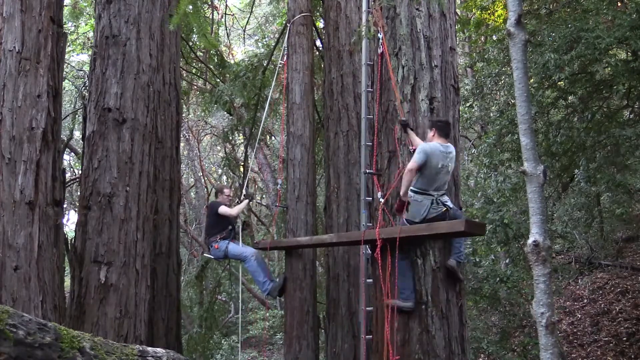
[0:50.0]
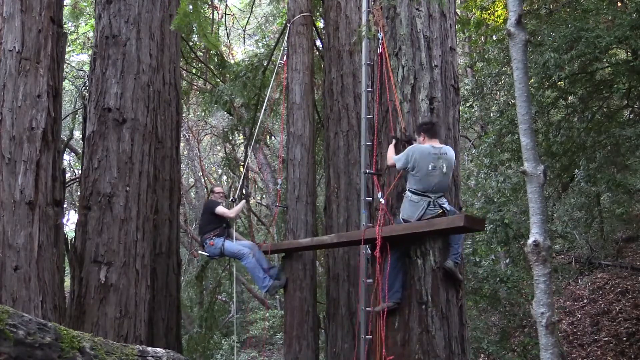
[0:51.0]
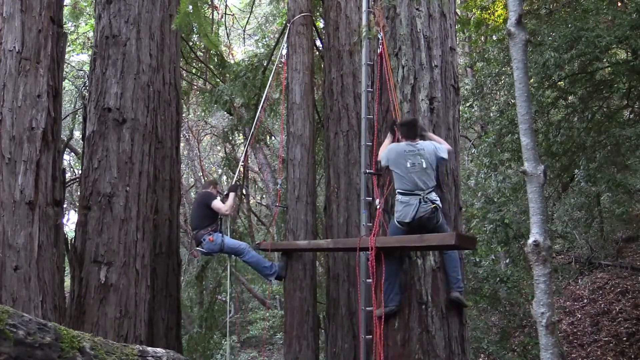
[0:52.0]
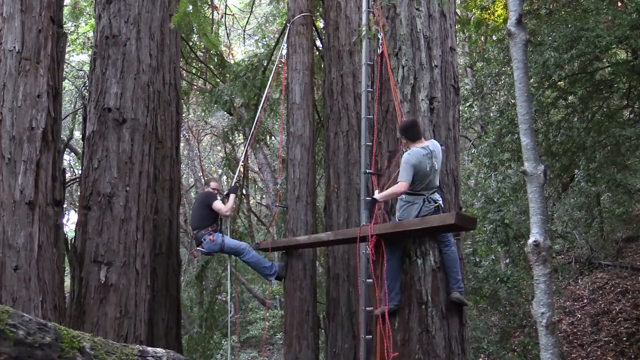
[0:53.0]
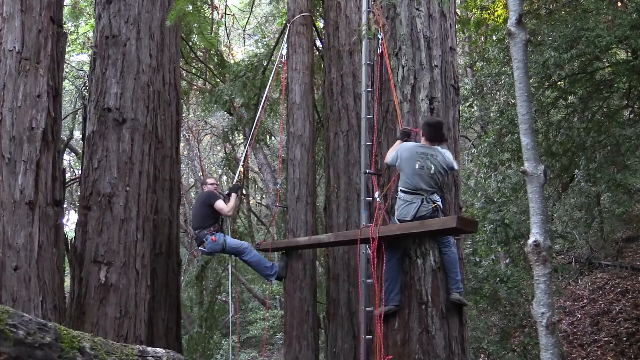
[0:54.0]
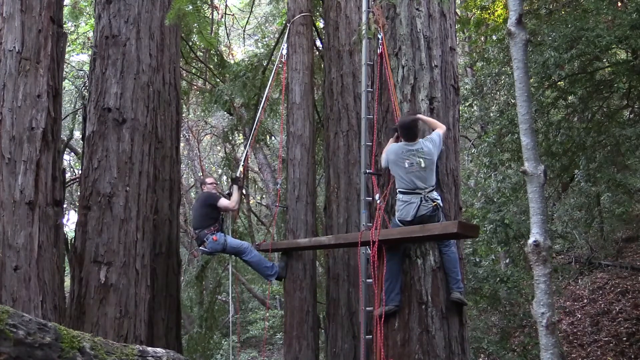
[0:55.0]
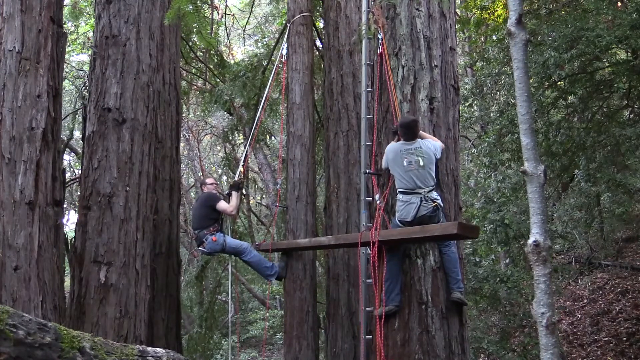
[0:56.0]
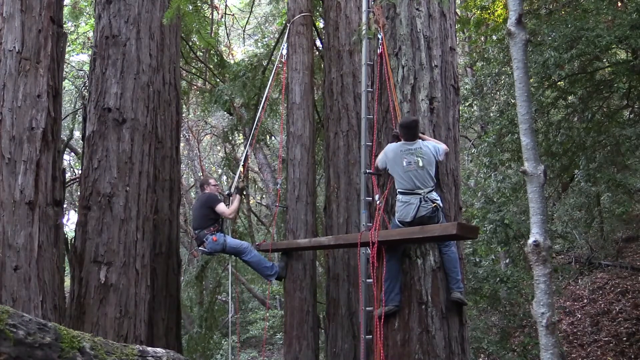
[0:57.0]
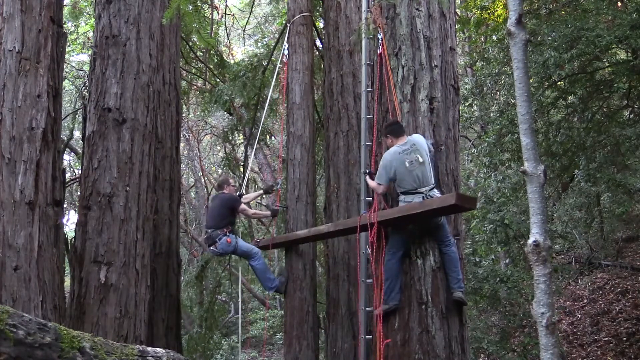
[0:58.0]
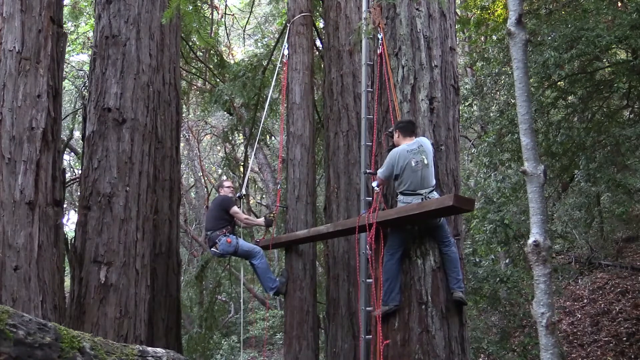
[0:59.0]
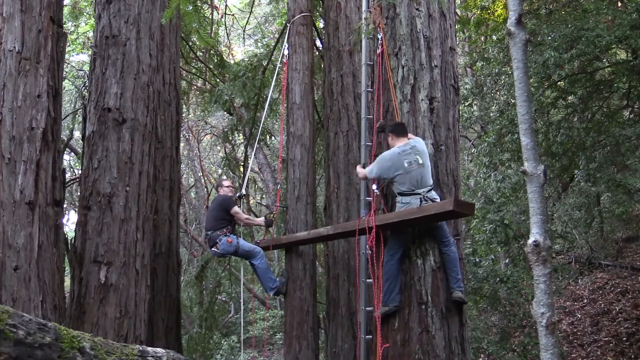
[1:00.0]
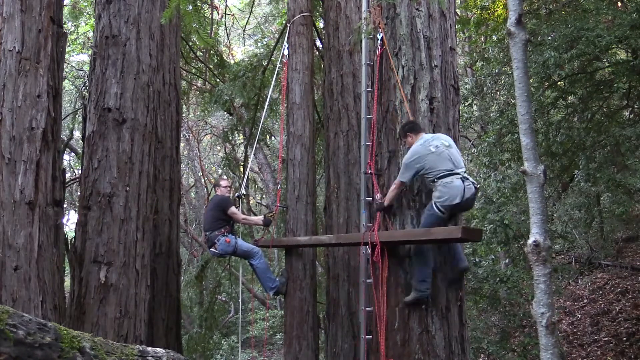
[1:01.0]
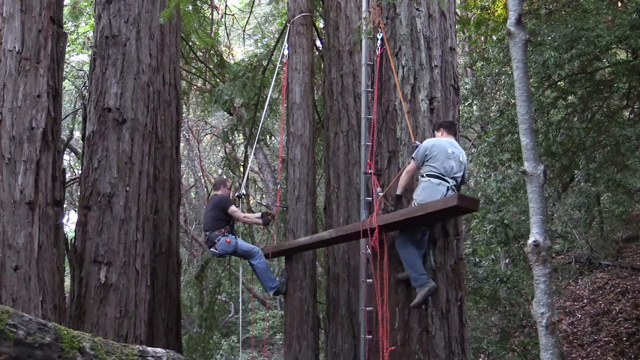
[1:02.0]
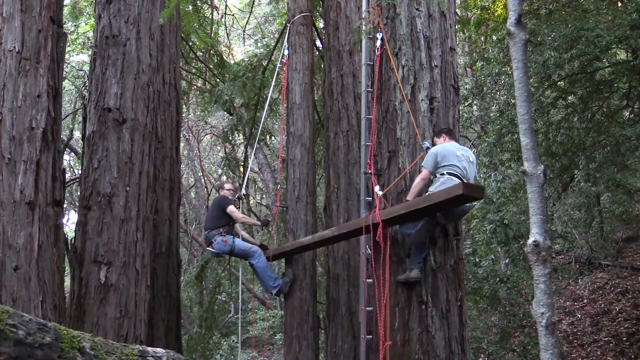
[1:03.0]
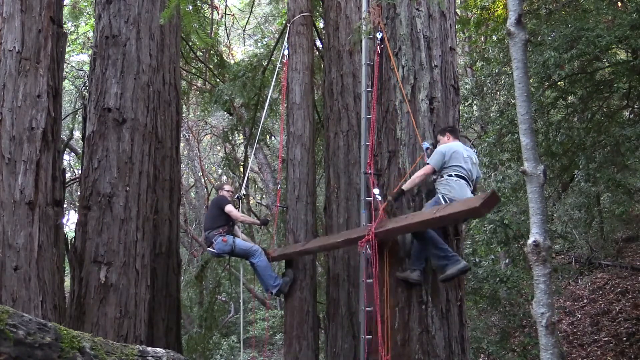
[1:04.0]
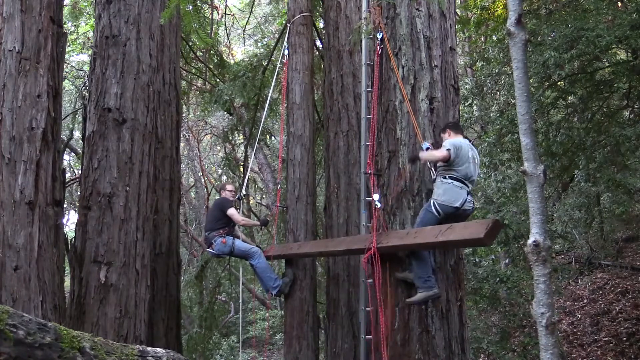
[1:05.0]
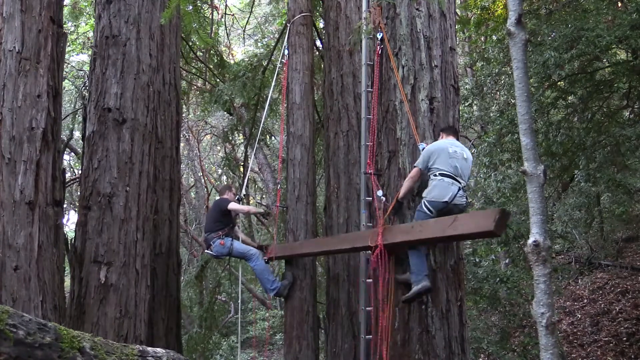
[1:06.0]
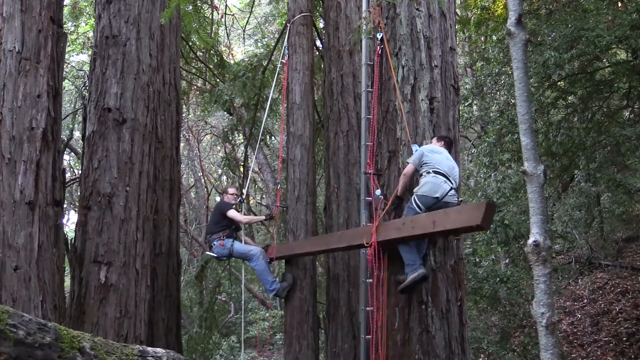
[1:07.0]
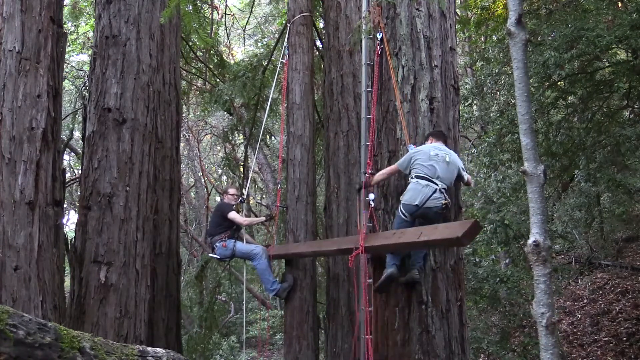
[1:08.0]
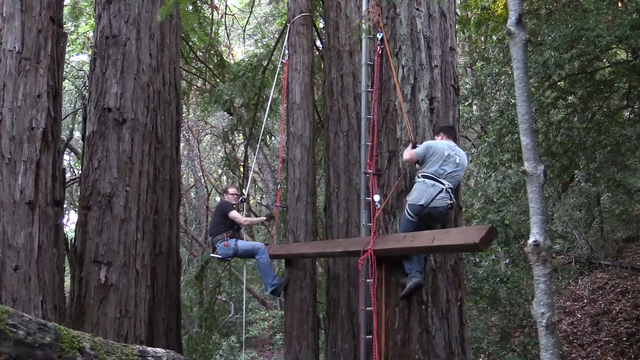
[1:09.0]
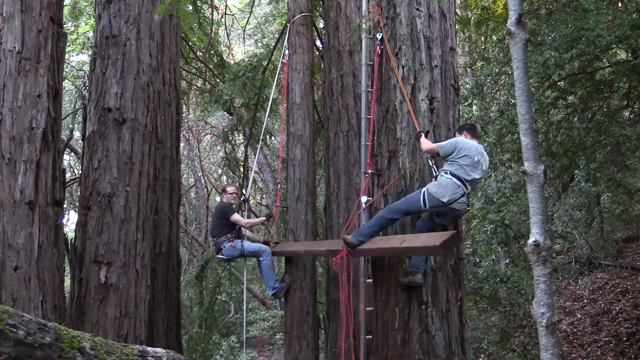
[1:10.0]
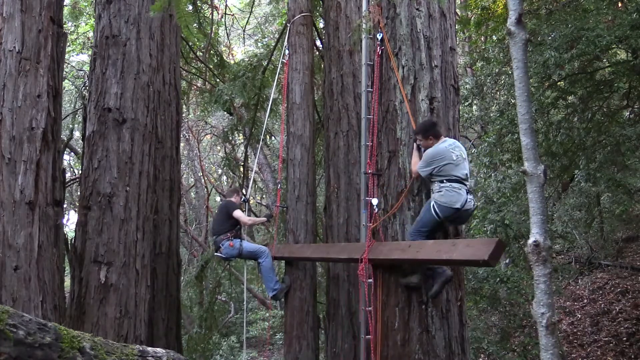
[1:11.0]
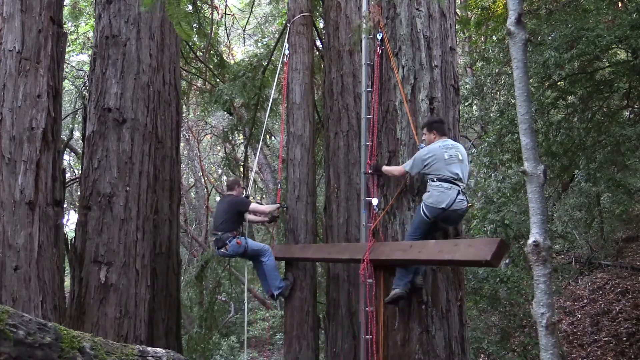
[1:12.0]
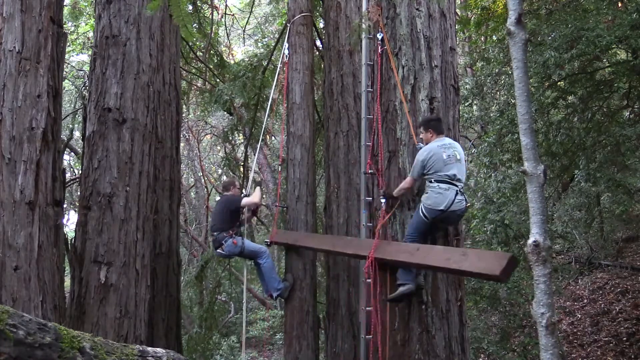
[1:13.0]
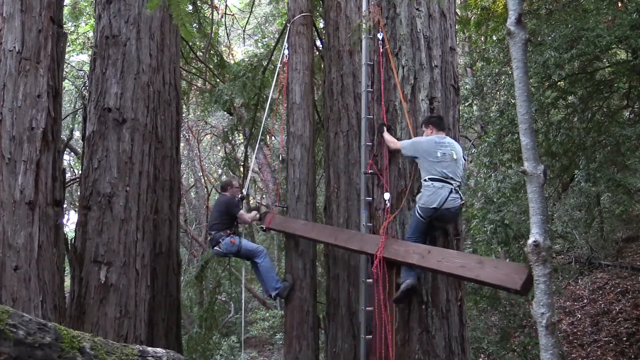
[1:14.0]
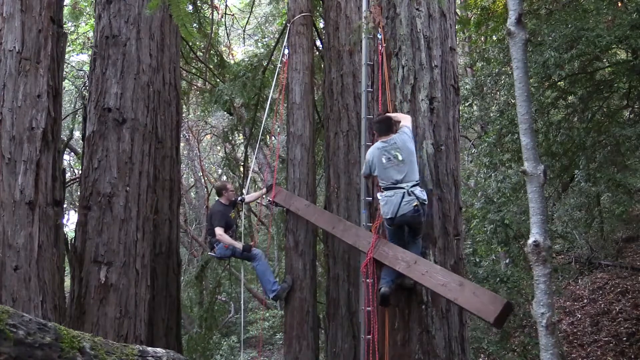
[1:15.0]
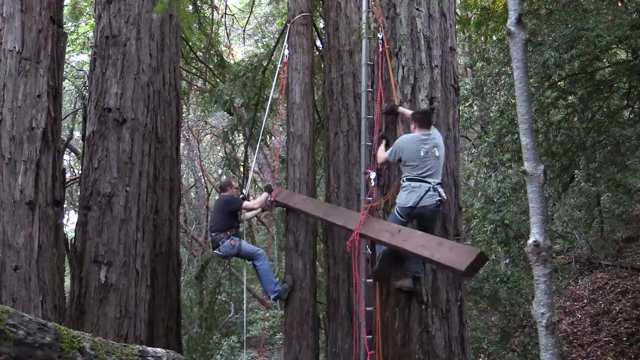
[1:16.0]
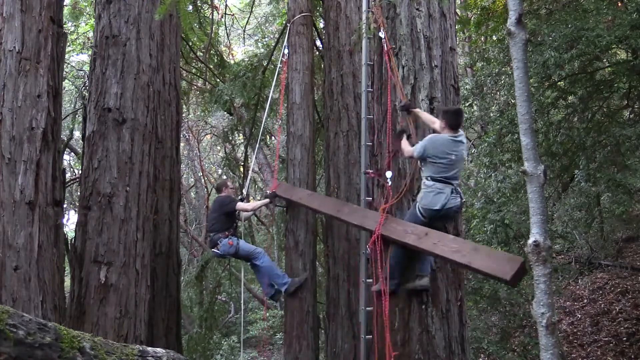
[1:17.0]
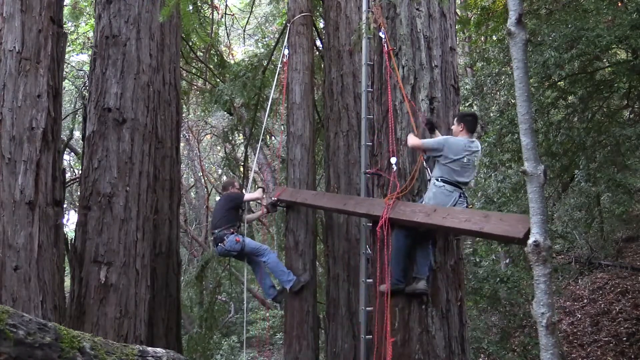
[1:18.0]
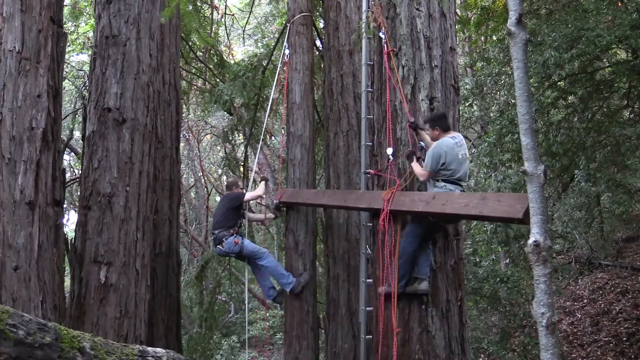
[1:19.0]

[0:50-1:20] Both men remain securely attached to the tree as the beam on the rope reaches thigh height. The man on the left, in the gray t-shirt and blue jeans, fiddles with the ropes securing the beam, making it tilt slightly higher on one side and lower on the other before it becomes stably level again. He keeps pulling on the rope holding the beam to try to stabilize it. He then stretches his right leg out off the tree and onto the beam to push the beam out, brings his leg back to the tree, and pulls on the ropes again, adjusting them to make the beam perfectly parallel. Stabilized and perfectly parallel, the beam is now at the height of the men's upper thighs.